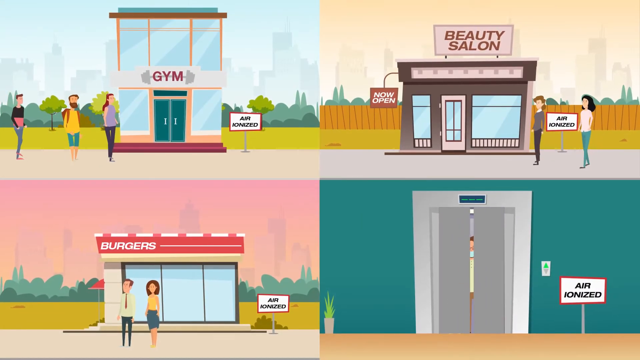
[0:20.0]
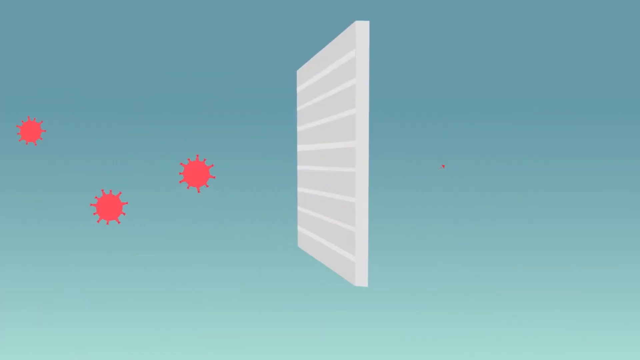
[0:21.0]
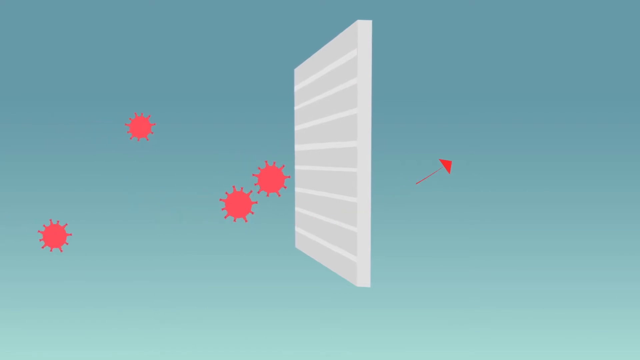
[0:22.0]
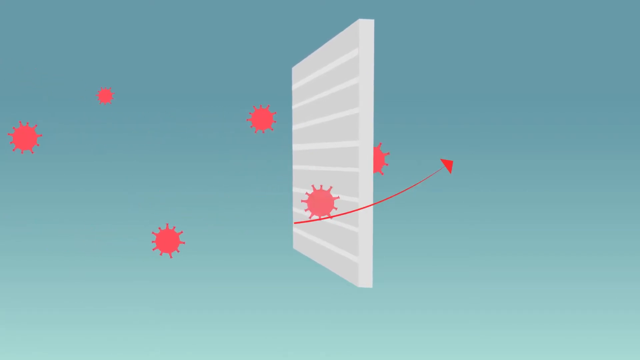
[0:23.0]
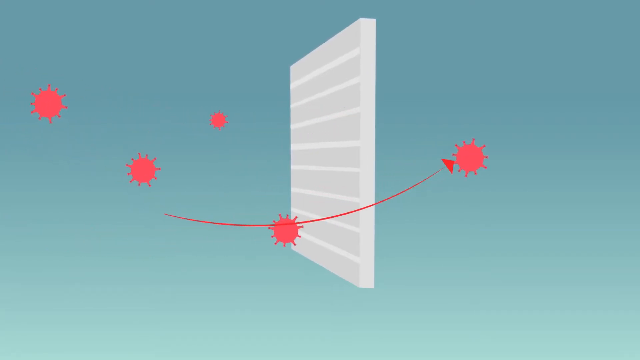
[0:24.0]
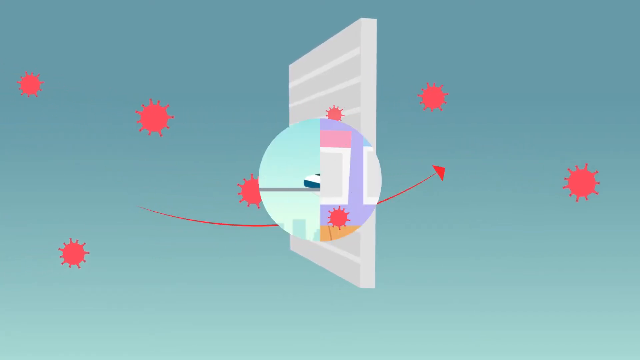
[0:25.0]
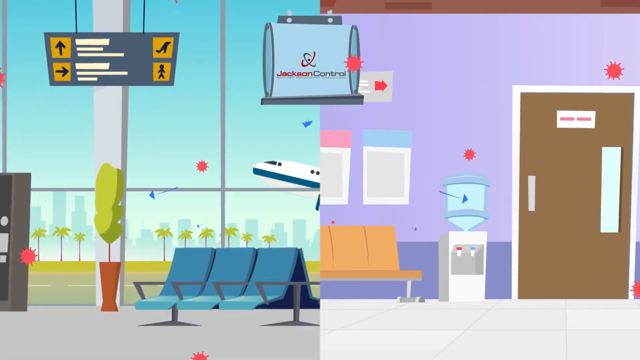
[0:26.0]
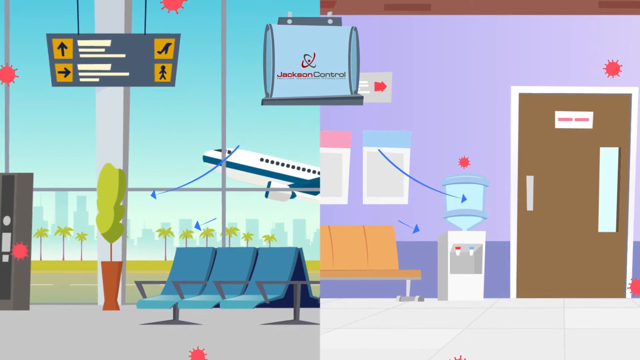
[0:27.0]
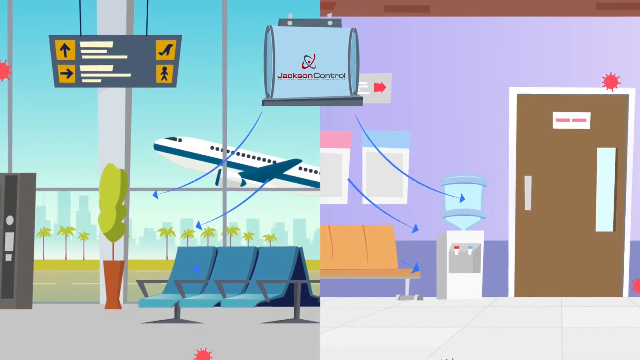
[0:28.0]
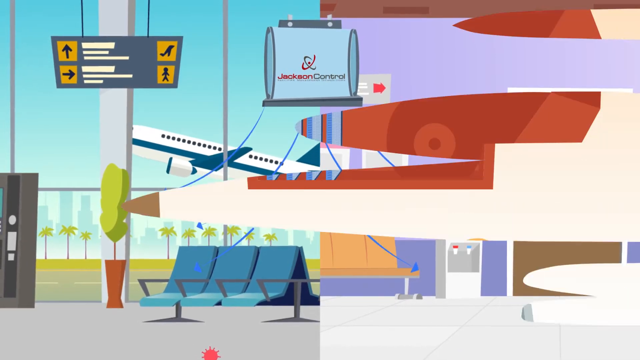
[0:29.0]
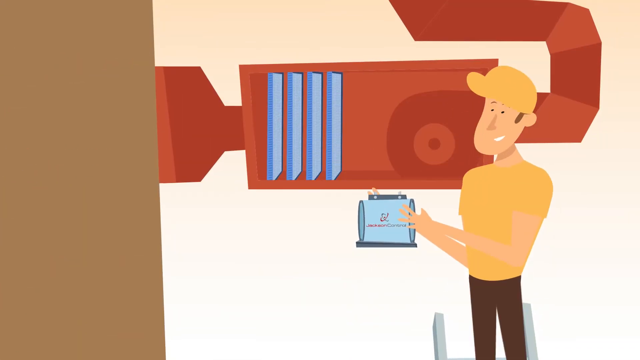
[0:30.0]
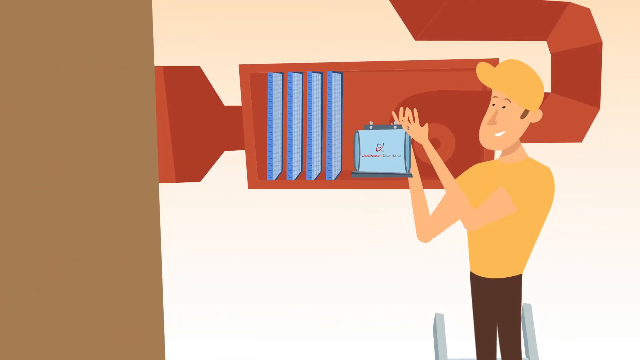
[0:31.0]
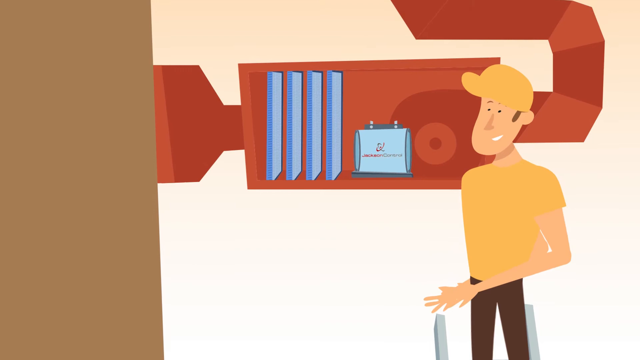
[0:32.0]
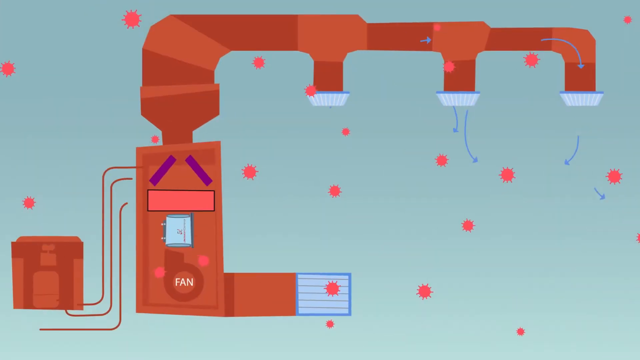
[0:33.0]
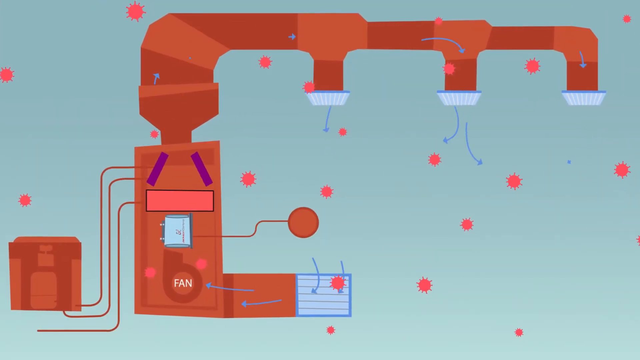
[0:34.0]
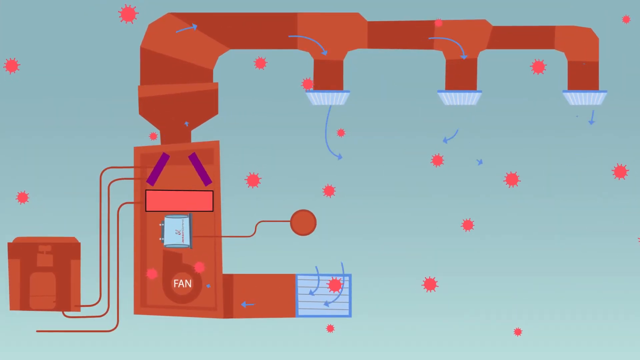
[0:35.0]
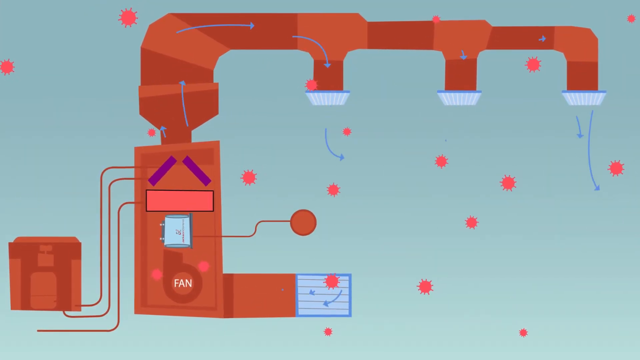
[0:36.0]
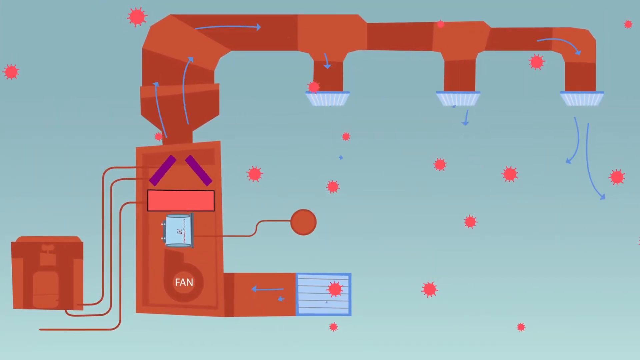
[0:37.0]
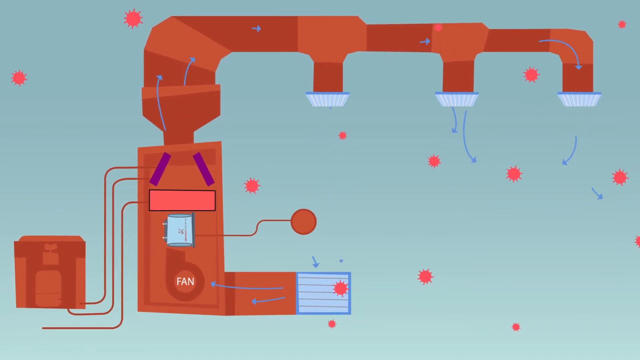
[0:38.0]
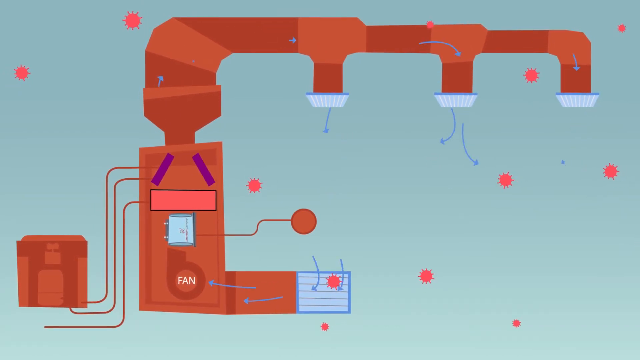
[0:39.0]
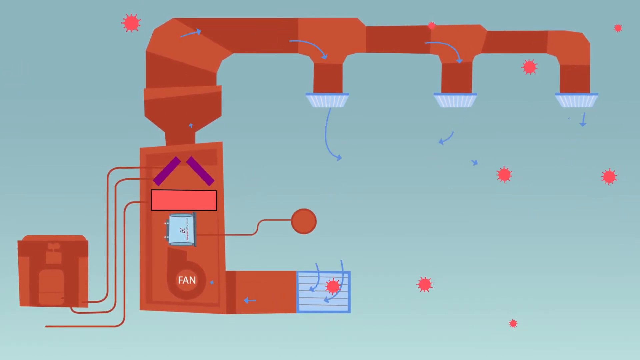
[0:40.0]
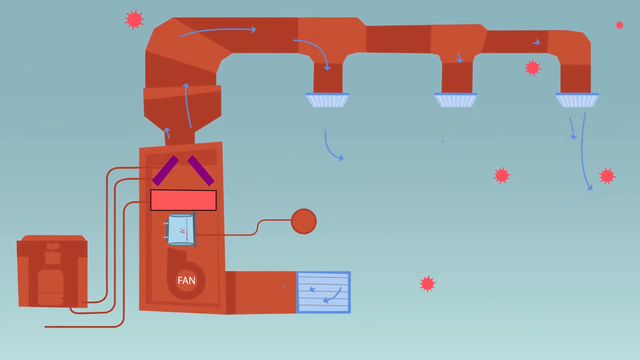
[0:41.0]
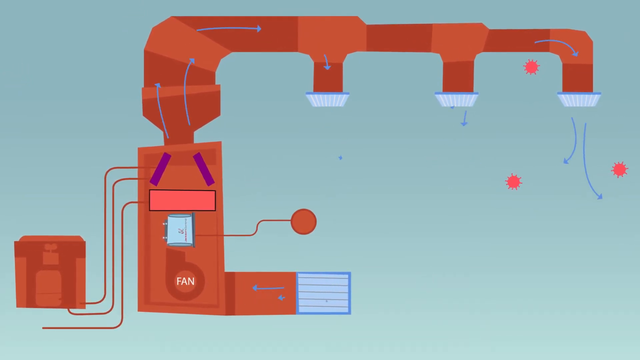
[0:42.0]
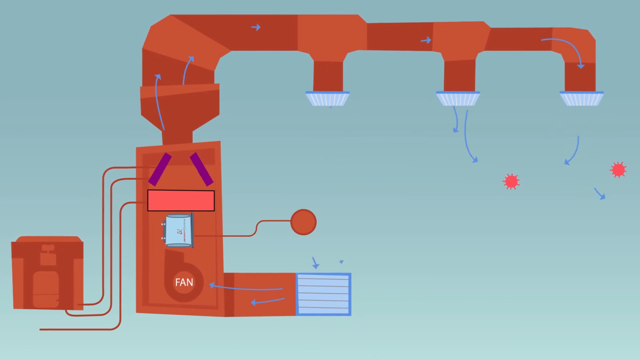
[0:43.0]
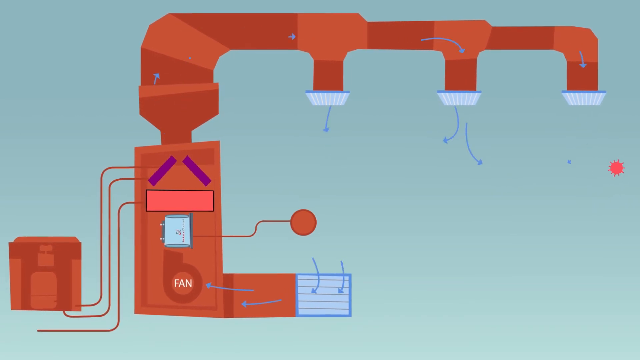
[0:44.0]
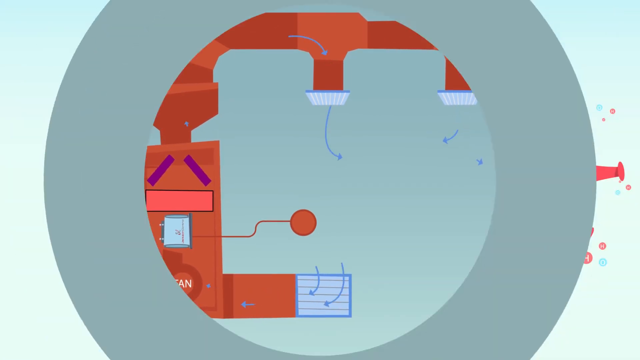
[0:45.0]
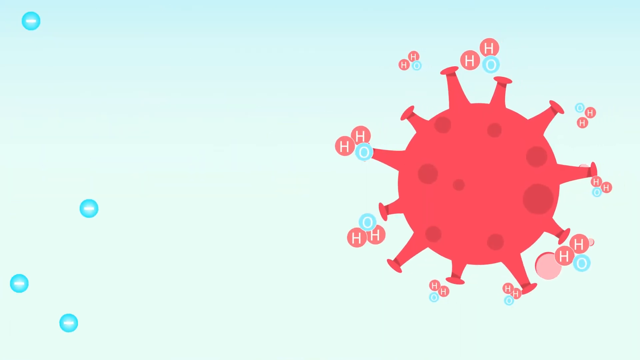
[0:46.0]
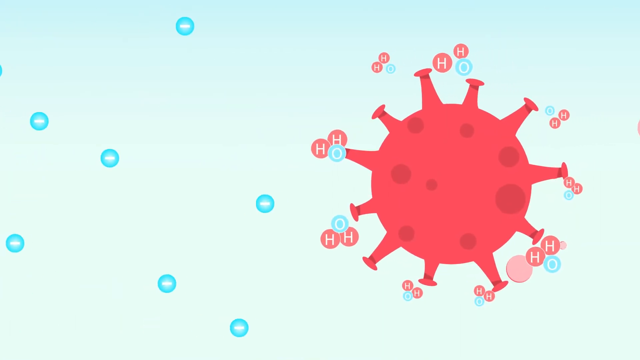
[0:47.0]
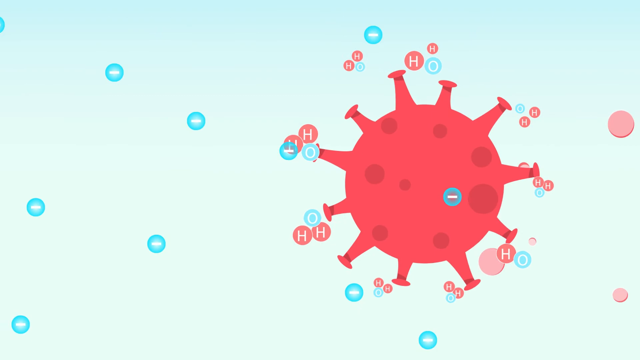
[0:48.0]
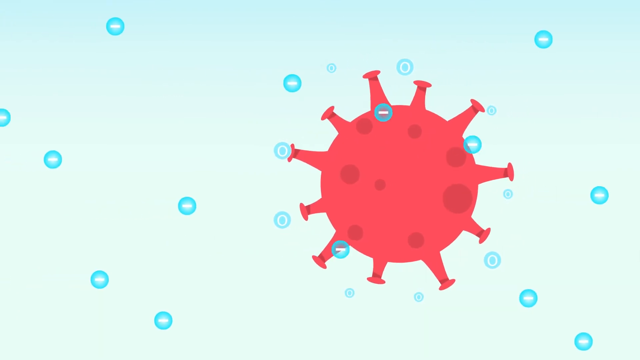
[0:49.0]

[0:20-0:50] The screen stays split into four quadrants showing the gym, beauty salon, restaurant and classroom. The scene then shifts to a diagram that takes up the whole screen, with a blue background and a gray shape in the middle that possibly represents a filter. Germ shapes move from the left side of the screen toward the right, into the filter; sometimes a germ shape makes it through, while other times they appear to be absorbed by the filter. Next is the inside of an airport with a purple wall, a door and several benches. In the middle toward the top is possibly a filter symbol bearing the logo of Jackson Control, with arrows swishing down from it and germ symbols still all around. The scene then shifts to a man apparently putting a filter into a duct system, and the diagram expands to show what looks to be a heating and cooling system hooked up to ductwork. Arrows flow out of the ducts, and with the filter added to the system, the floating germ symbols start diminishing.